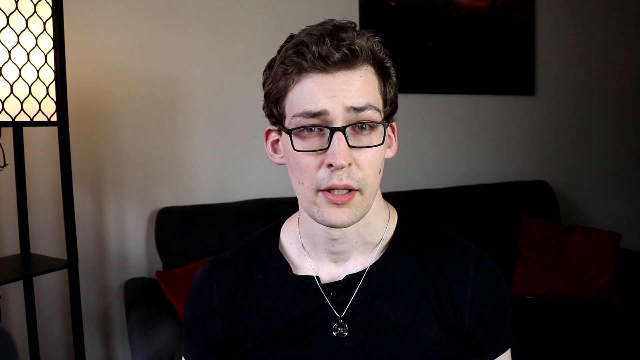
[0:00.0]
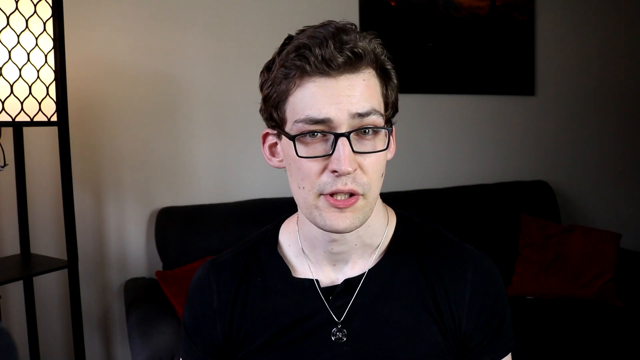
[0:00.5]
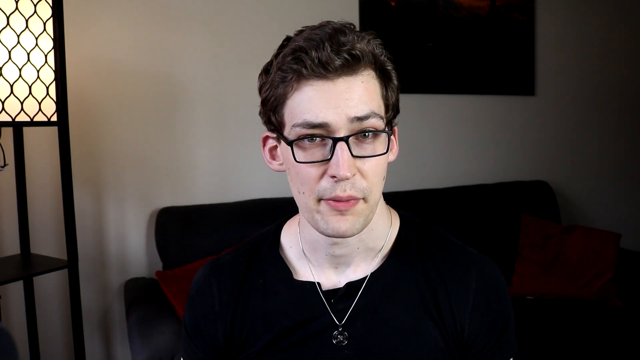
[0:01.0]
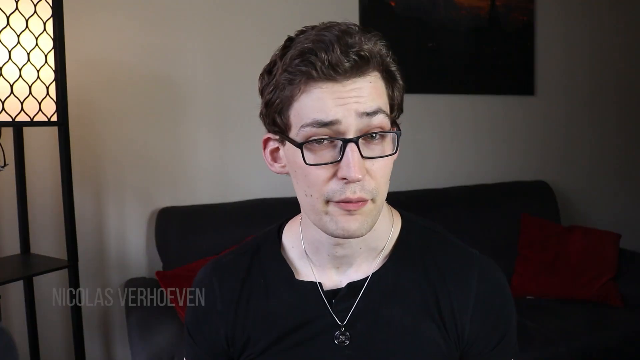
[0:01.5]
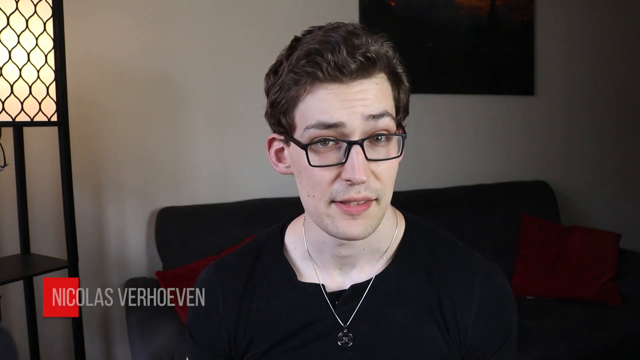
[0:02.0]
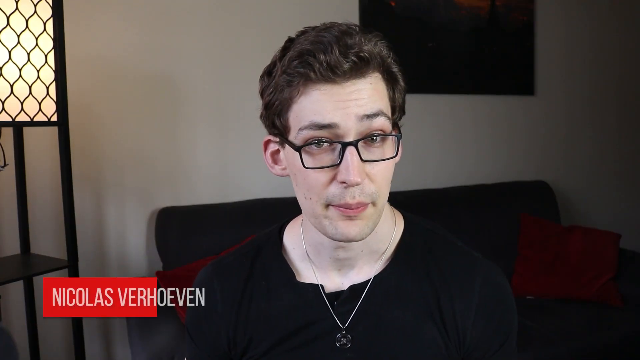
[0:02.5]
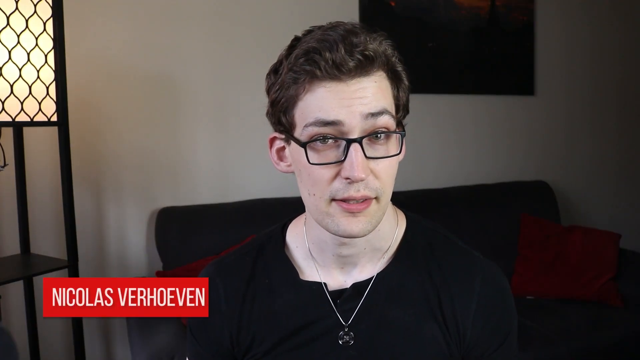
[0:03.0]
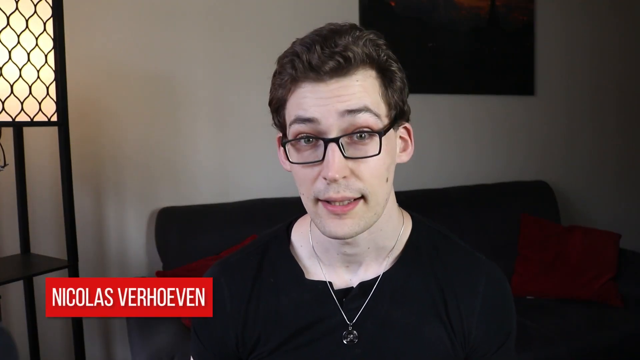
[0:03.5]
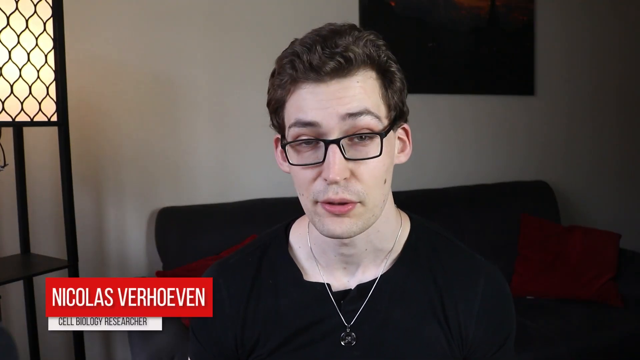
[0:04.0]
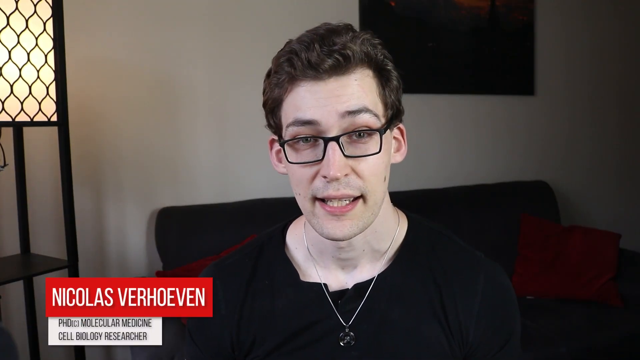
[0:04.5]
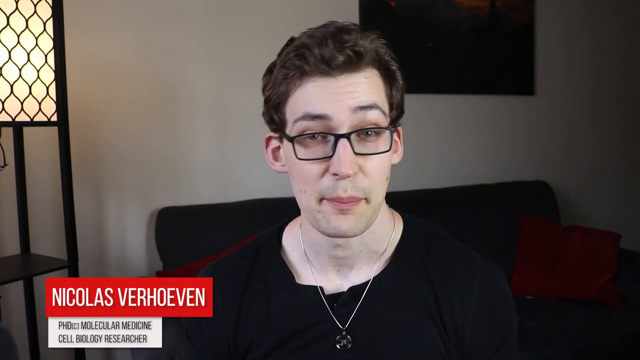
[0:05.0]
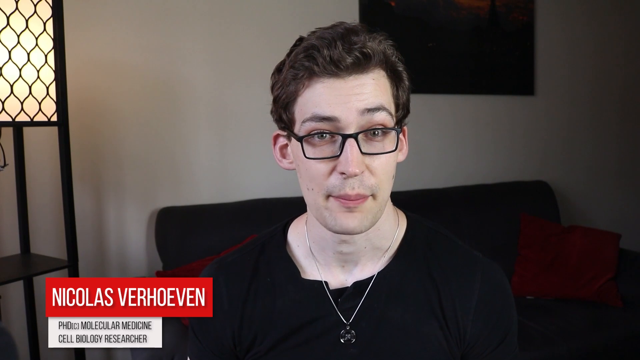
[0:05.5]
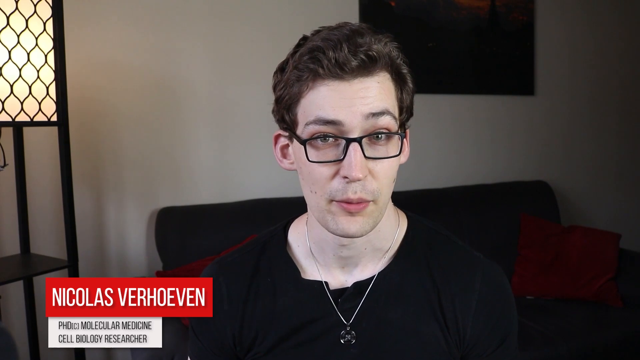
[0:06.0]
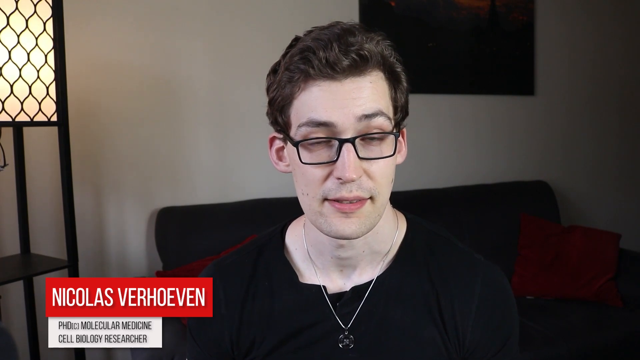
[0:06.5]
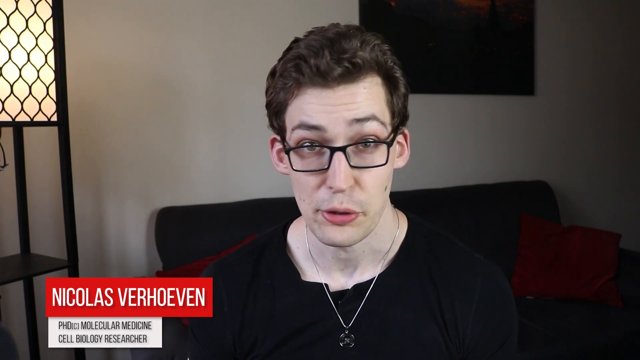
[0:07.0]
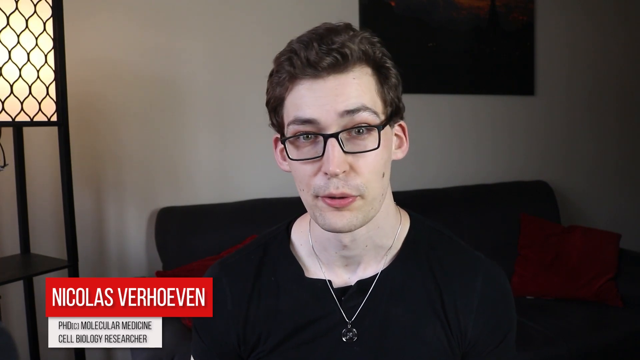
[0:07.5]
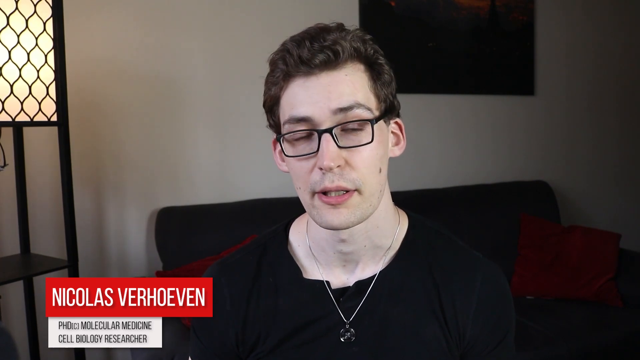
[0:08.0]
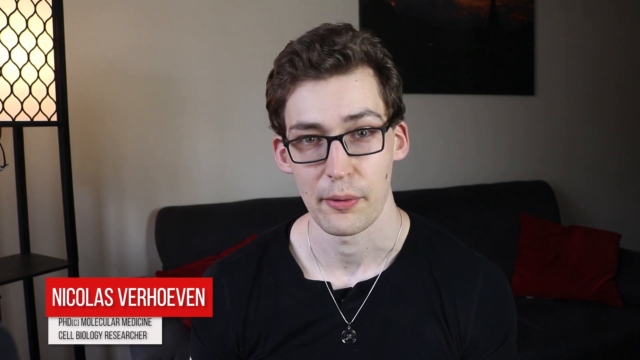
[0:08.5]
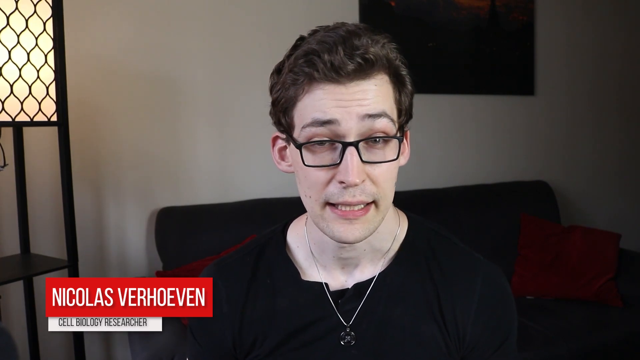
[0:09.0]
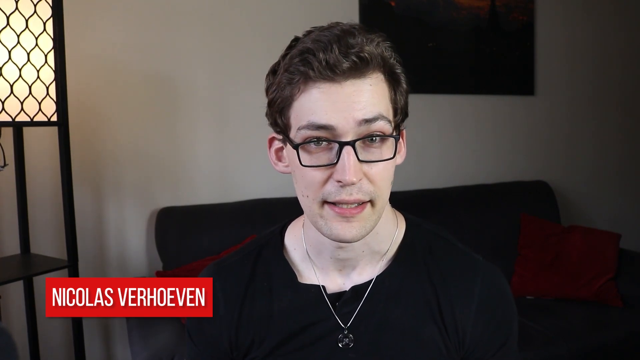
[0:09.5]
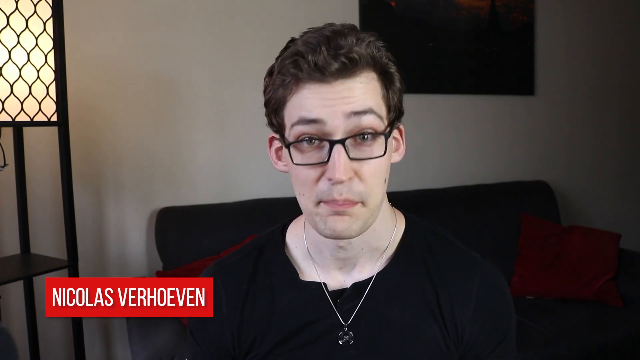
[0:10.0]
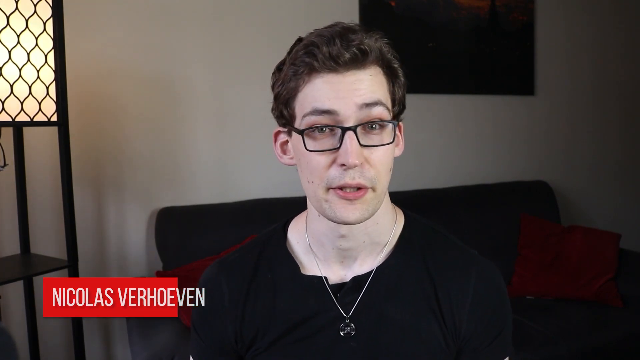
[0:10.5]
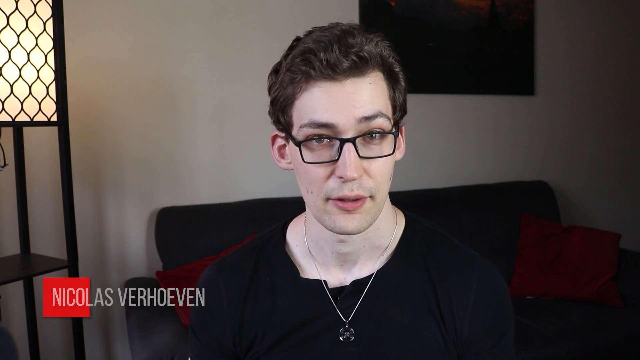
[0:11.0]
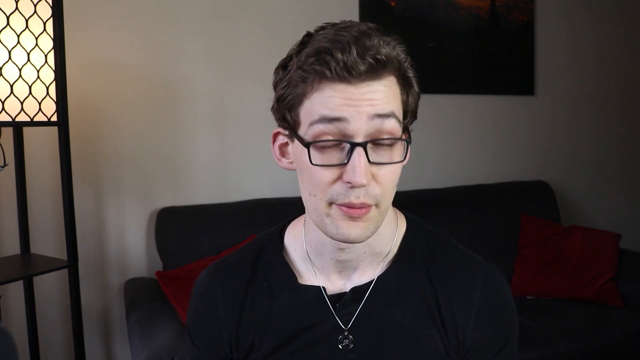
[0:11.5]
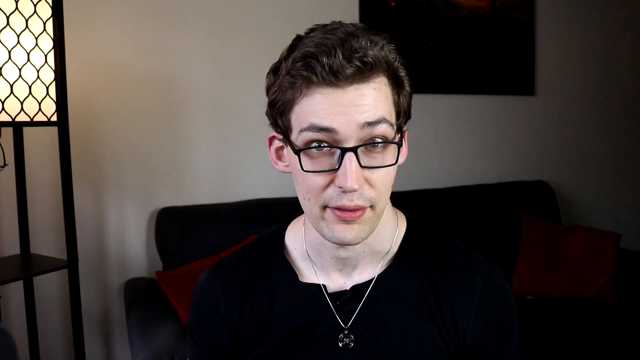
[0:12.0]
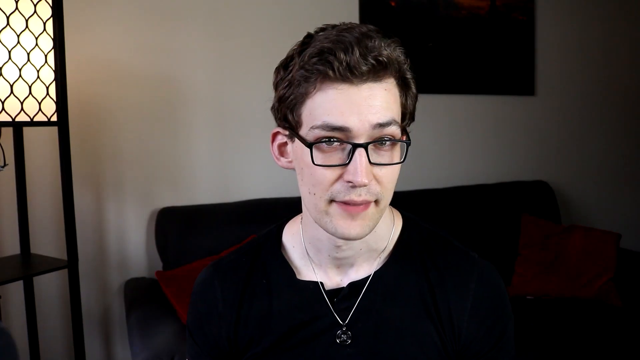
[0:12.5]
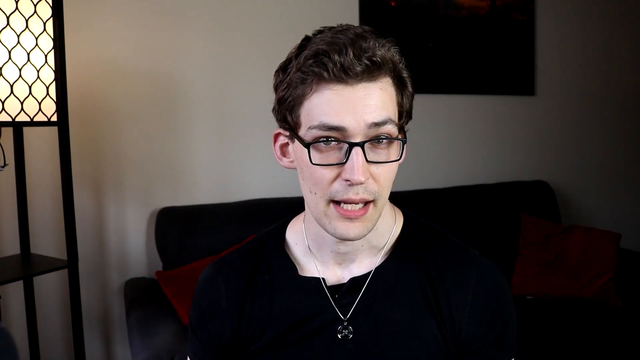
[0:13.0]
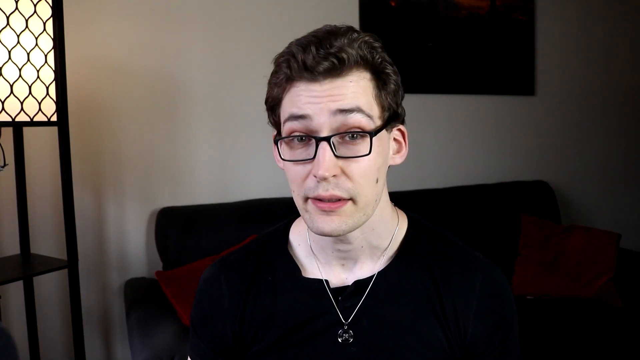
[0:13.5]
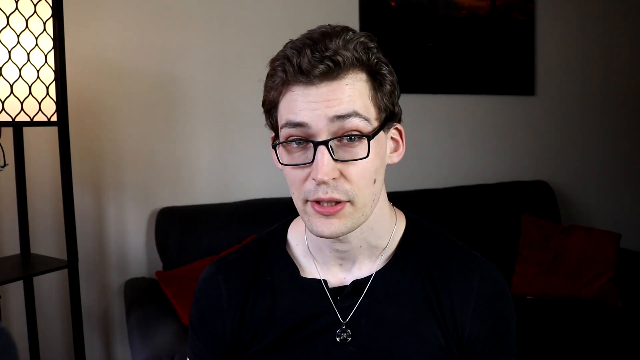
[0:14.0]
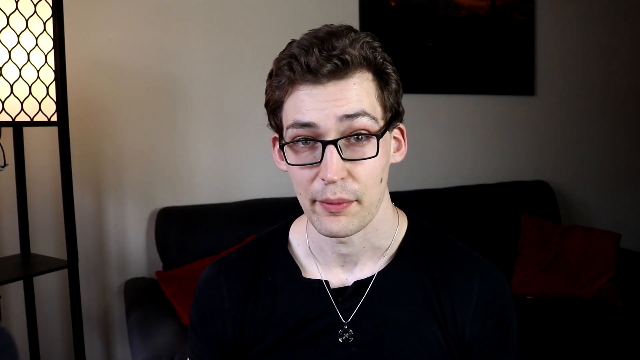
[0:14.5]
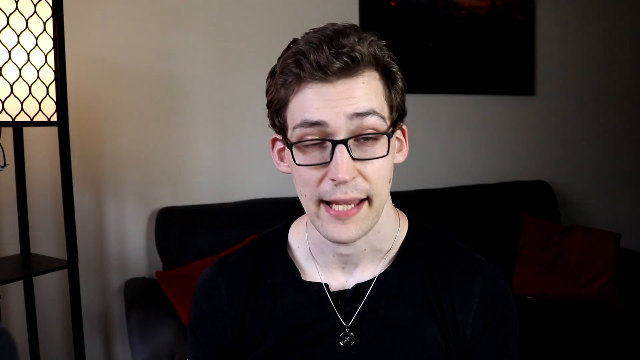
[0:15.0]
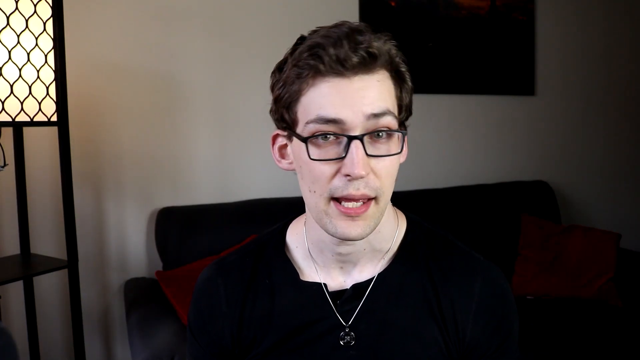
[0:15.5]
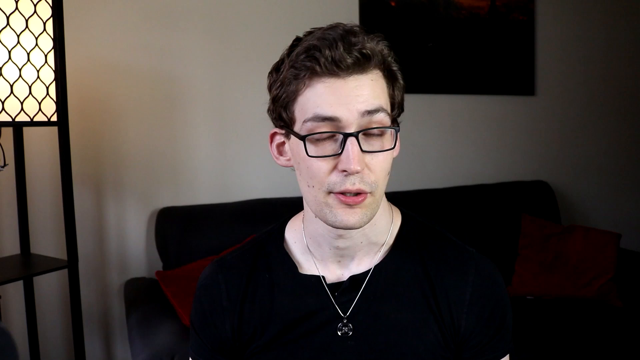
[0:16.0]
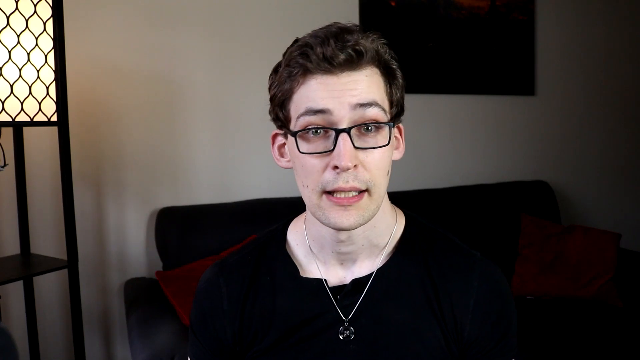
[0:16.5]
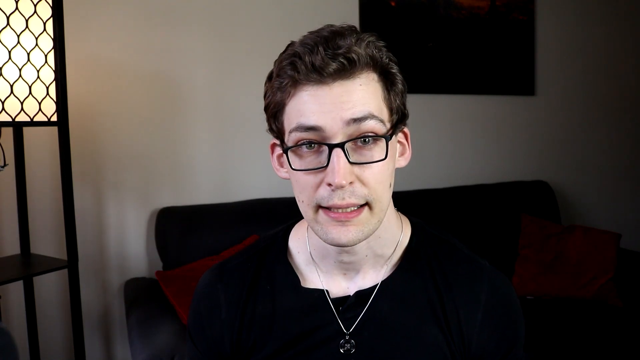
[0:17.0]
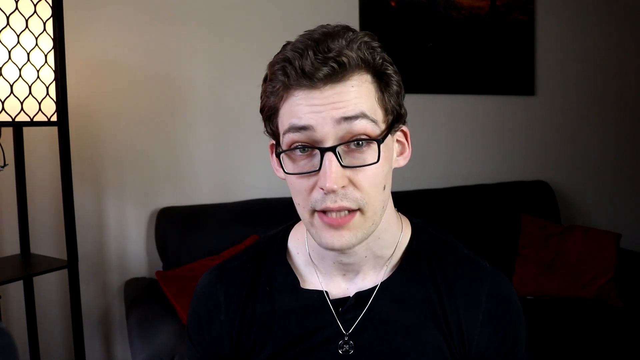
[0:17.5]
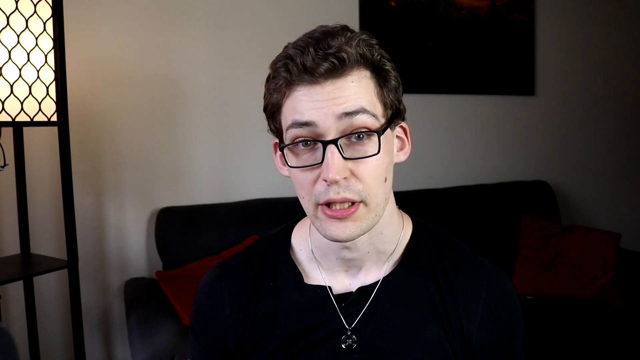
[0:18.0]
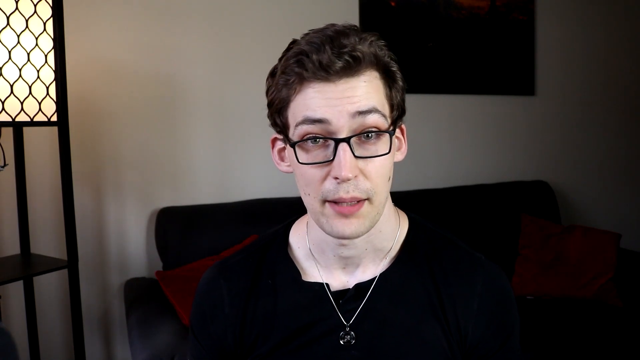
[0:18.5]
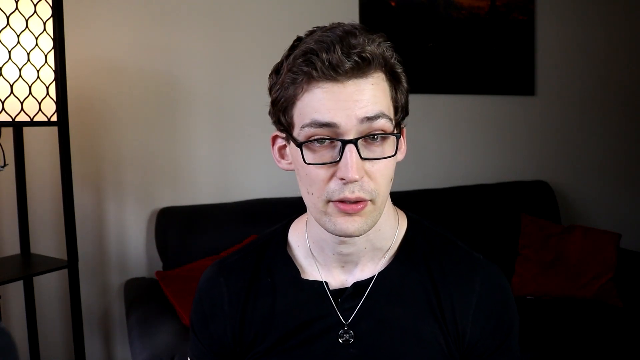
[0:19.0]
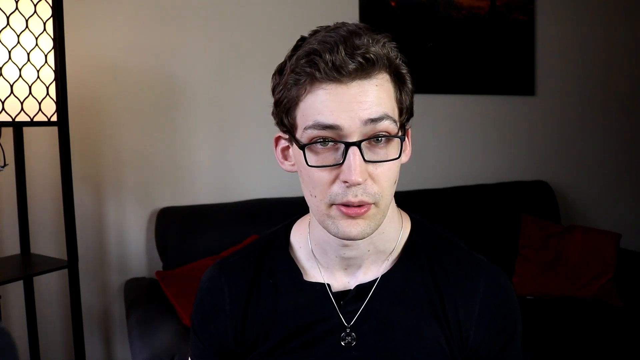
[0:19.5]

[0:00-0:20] The presenter, Stephen Verhoeven, is a white man with brown hair, square-rimmed black glasses and a black Henley shirt. Behind him is a black couch with red pillows, and a painting hangs on the wall; it looks to be mostly black with a red figure in its center. To the left of the frame is a light with a metal, fence-like outer surround, with a space below it that looks like it may be a table or storage, like a lamp and nightstand combination.